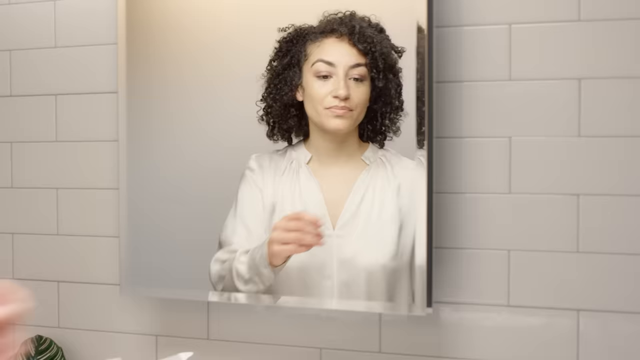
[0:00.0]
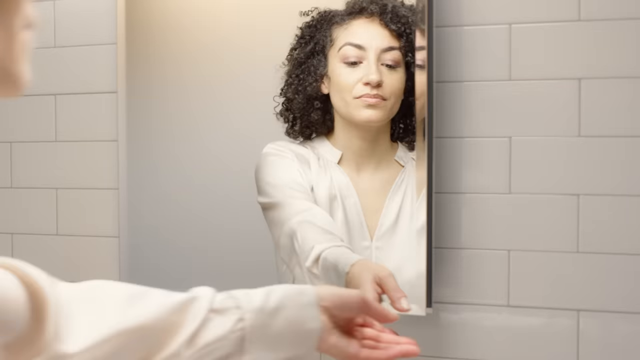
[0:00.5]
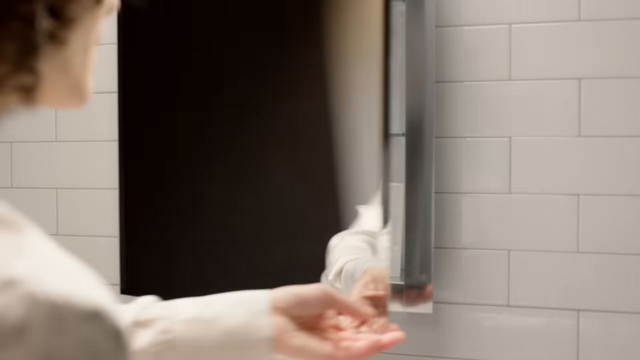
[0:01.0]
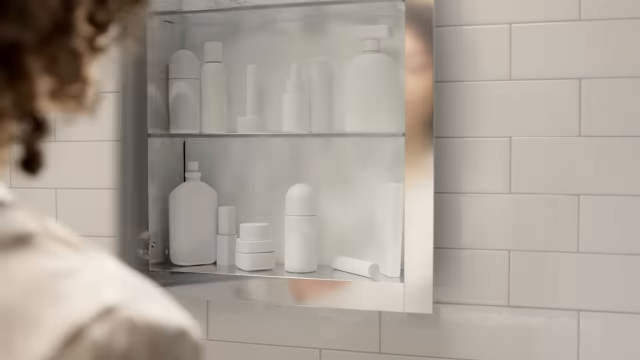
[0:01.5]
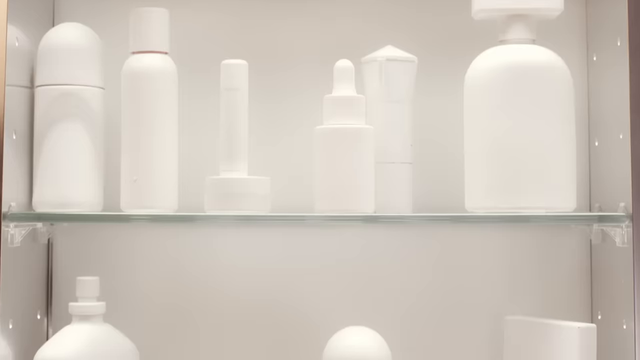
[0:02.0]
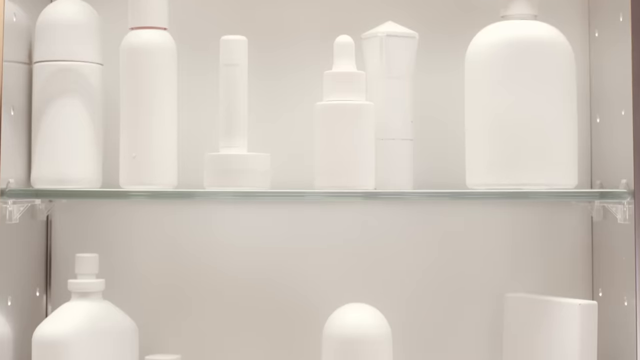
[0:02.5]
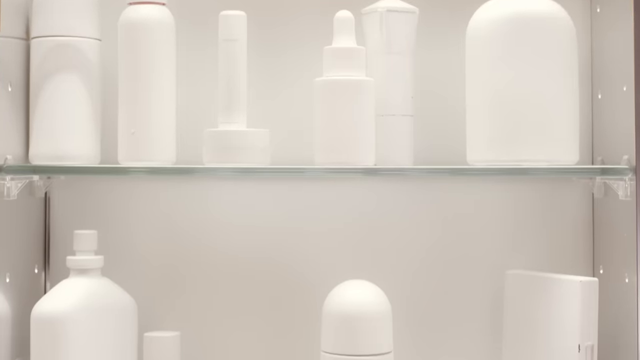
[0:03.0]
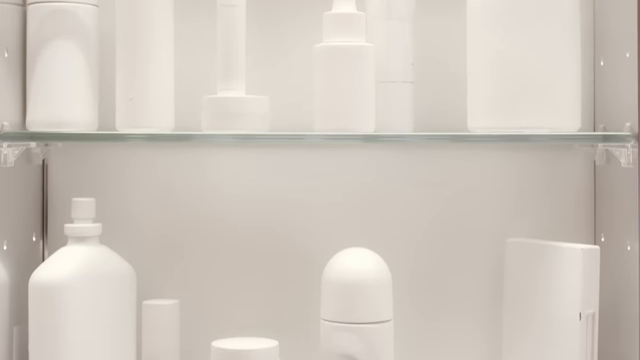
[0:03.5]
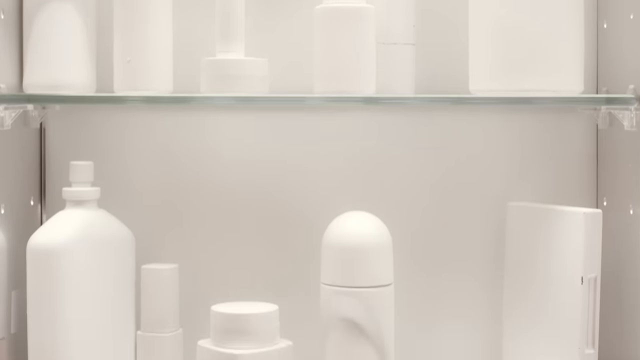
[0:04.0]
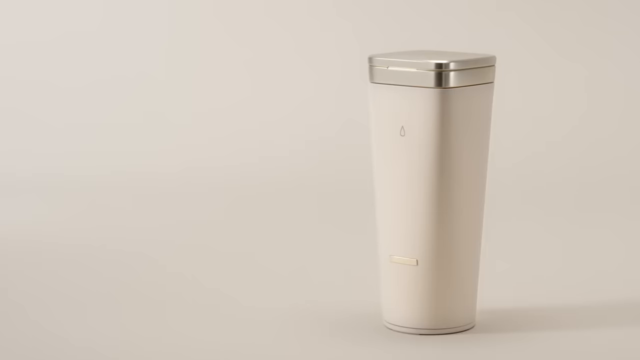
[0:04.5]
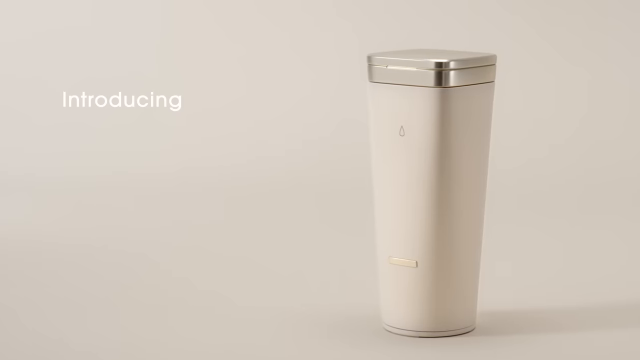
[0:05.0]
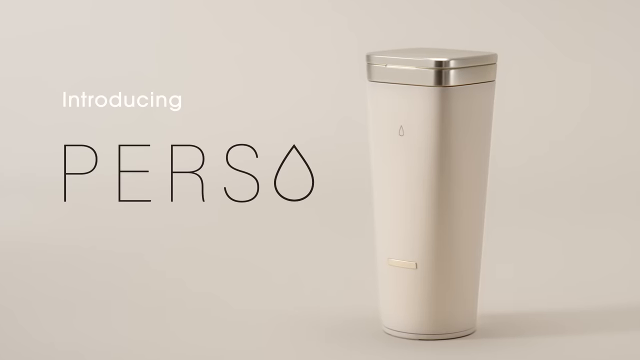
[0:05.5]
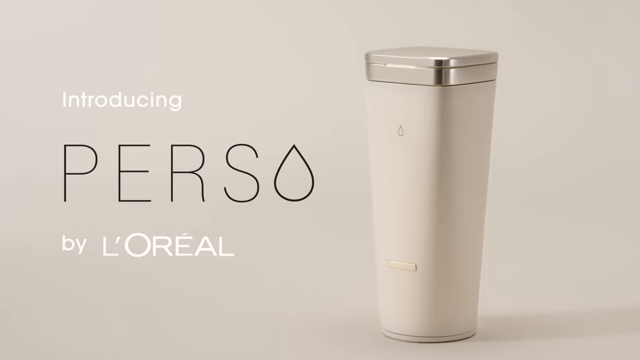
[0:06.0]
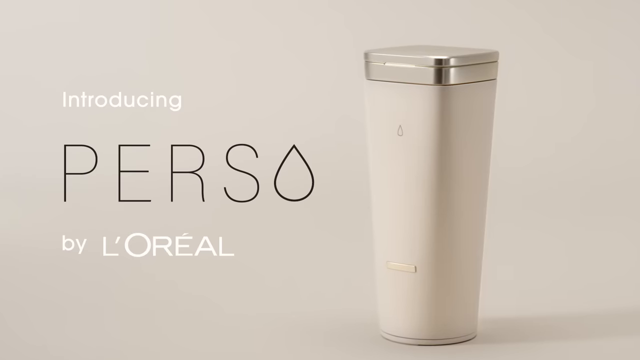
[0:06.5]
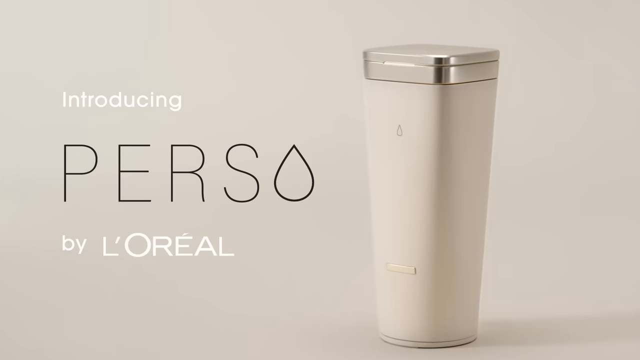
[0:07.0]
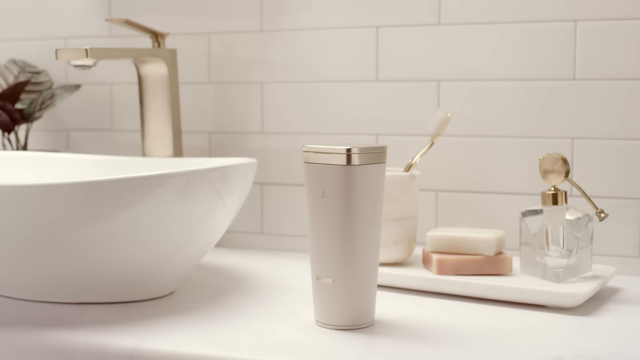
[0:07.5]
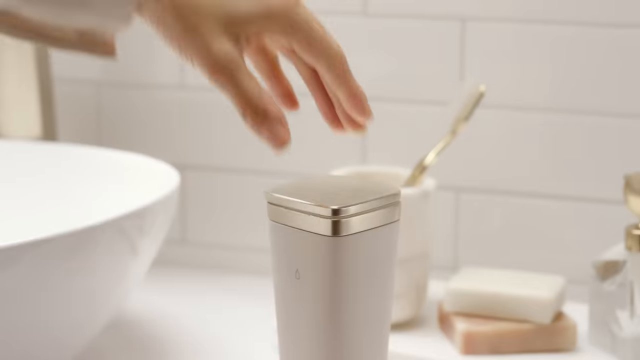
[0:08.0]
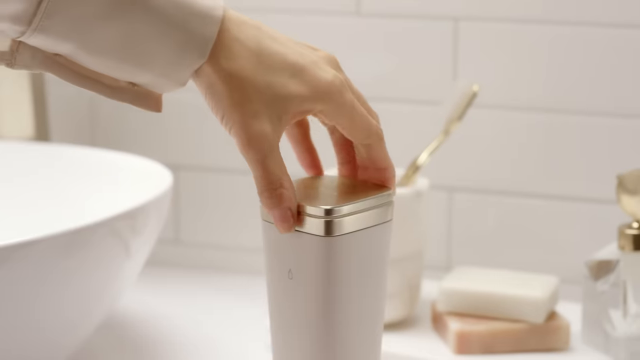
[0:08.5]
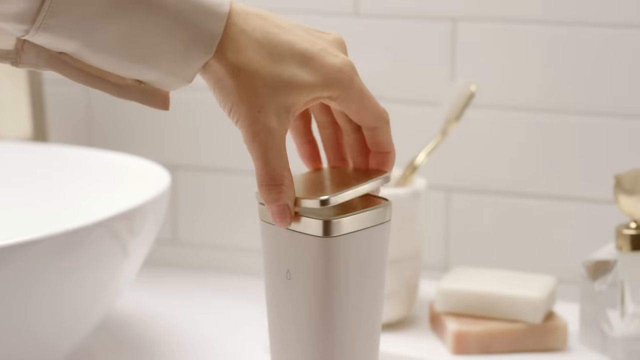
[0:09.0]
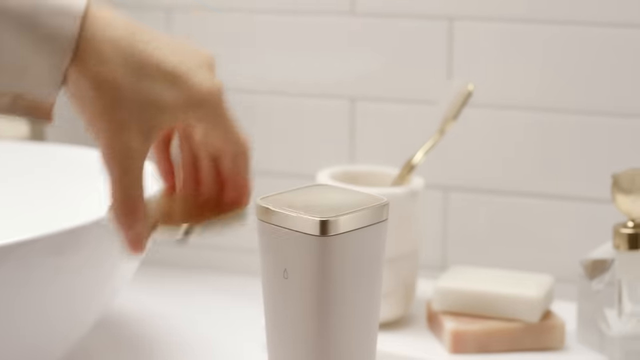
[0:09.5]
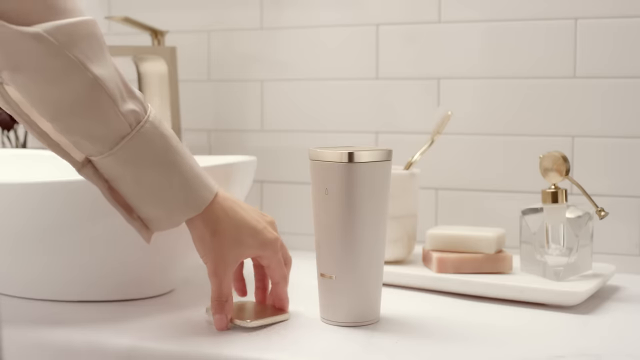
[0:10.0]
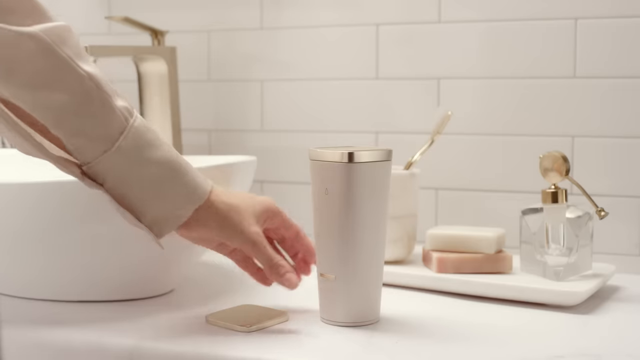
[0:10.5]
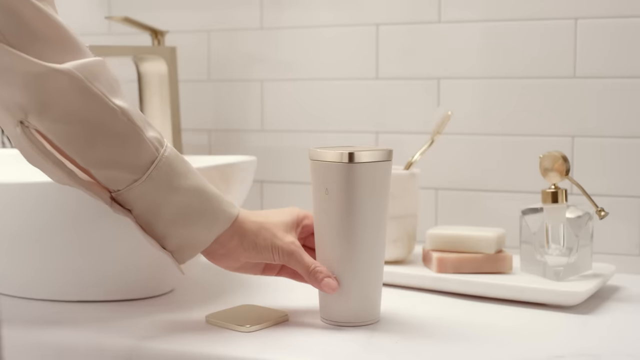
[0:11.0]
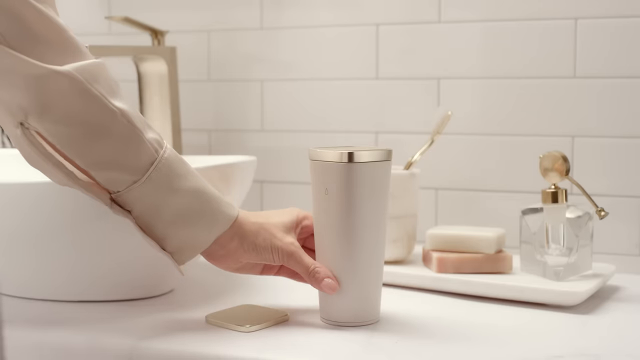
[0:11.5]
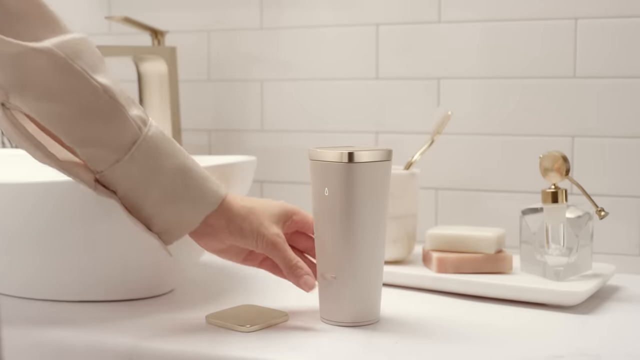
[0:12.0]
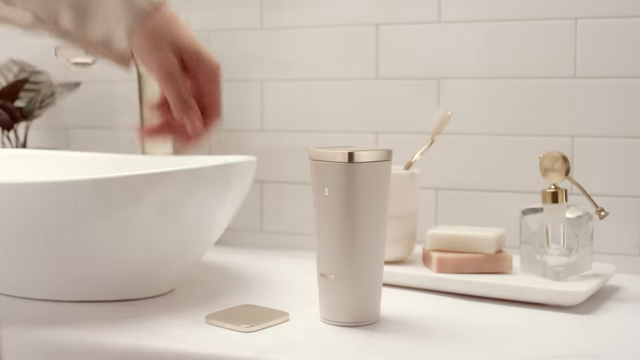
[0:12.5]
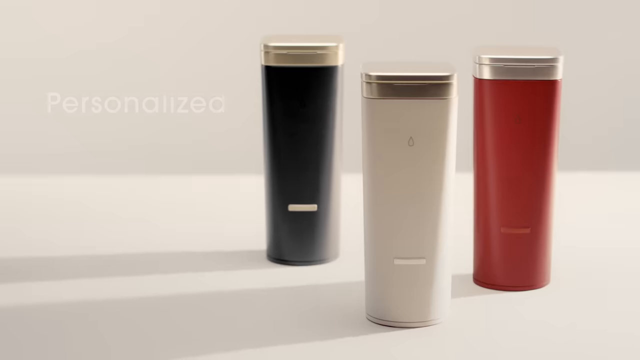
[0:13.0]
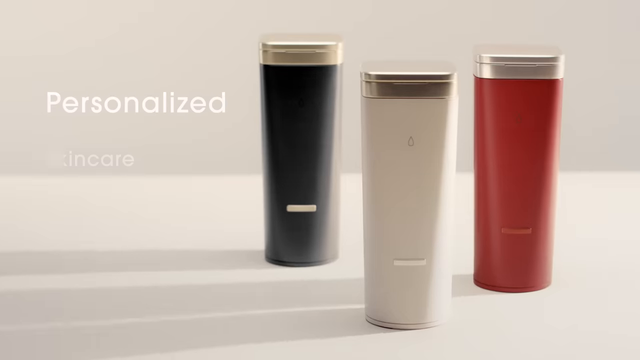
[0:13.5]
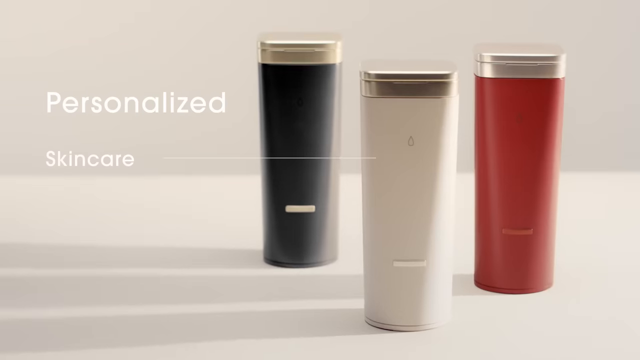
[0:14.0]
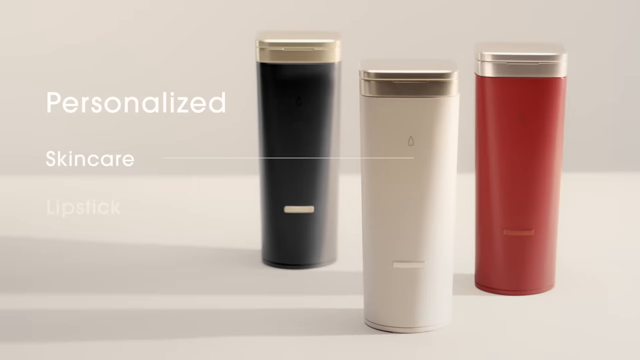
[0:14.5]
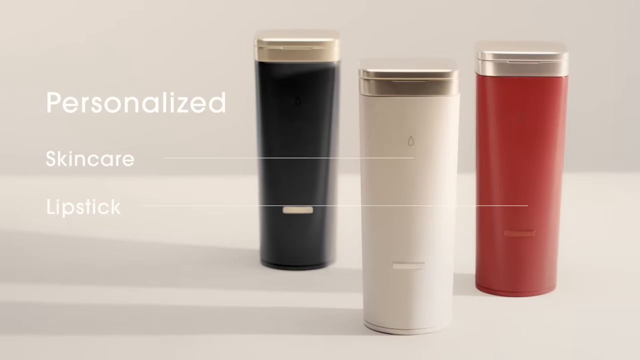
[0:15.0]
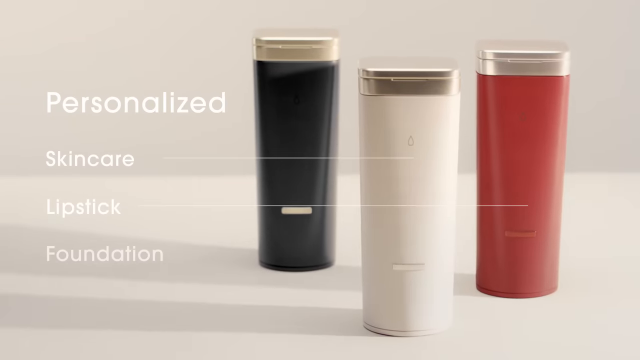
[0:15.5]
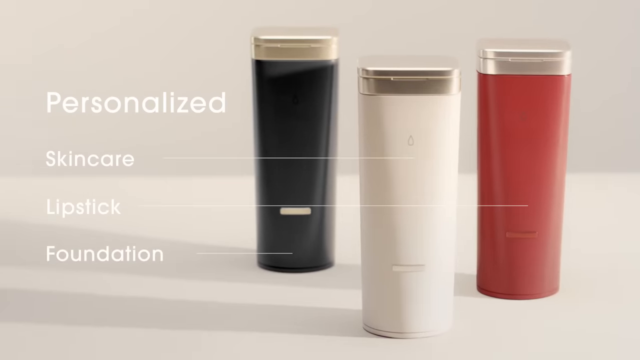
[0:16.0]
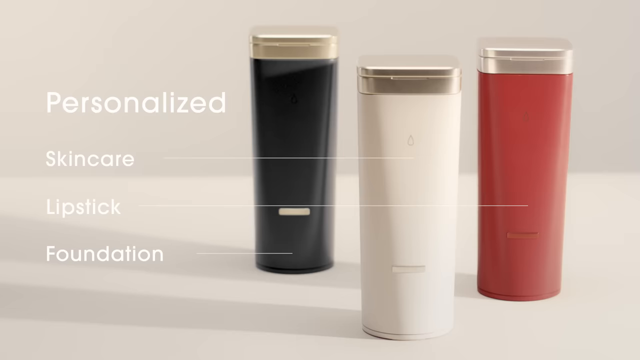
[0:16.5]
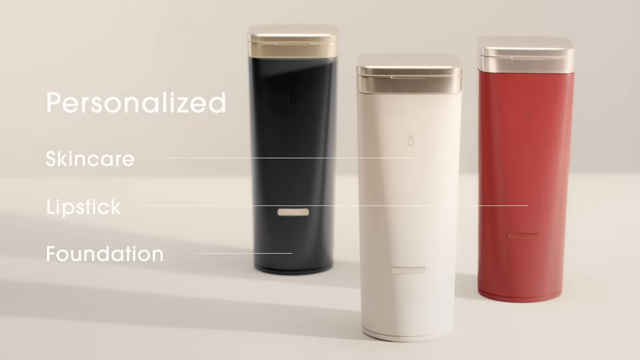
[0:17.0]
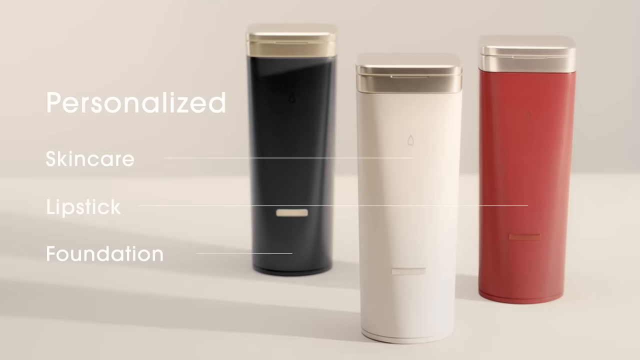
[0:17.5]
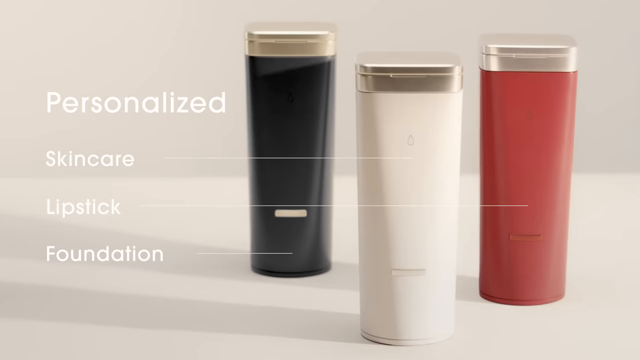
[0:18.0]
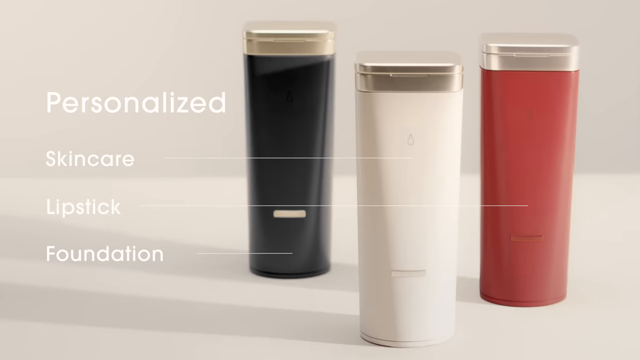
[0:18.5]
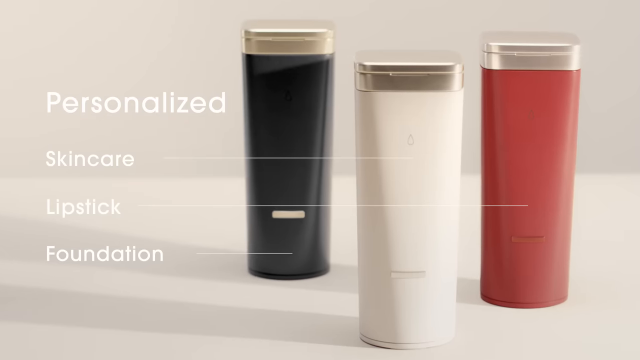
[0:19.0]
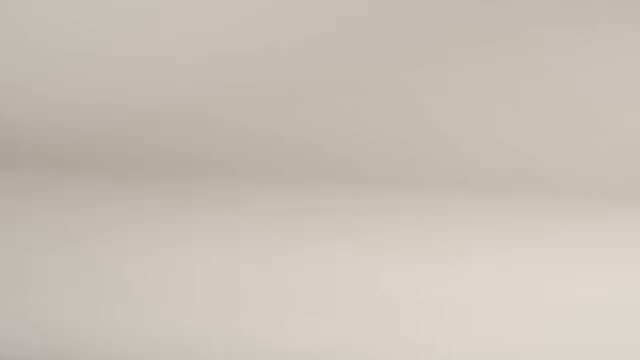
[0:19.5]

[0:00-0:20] A lady with brown curly hair and a white top is in her bathroom, and her reflection is visible in the bathroom cabinet on a white tiled wall. She reaches in and opens the cabinet, revealing a display of blank bottles, all in white; they look like eardrops, a deodorant and some sprays, with no logo, and everything appears plain and white. The camera zooms down to the bottom shelf. A transition introduces a product by L'Oreal called Perso: a picture of the product is on the right-hand side and text on the left reads "introducing Perso by L'Oreal". A quick transition returns to the bathroom, where one of these products is on the side of the sink. The lady reaches over with her left hand, takes the lid off the product and presses a button on the bottom, which seems to turn on a light. Another transition shows three of these products in a line, a blue one, a white one and a red one, with text on the side reading "personalised skin care, lipstick and foundation".